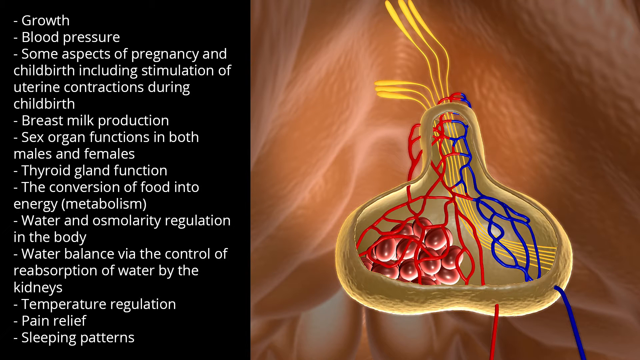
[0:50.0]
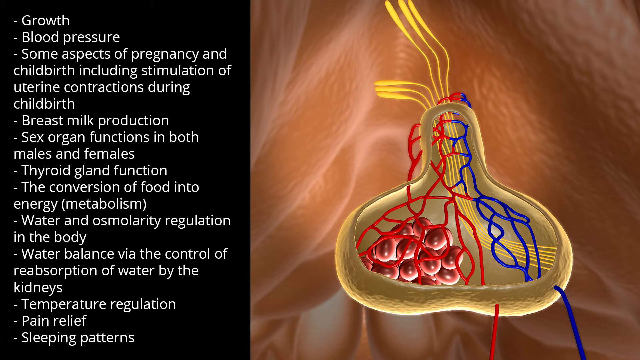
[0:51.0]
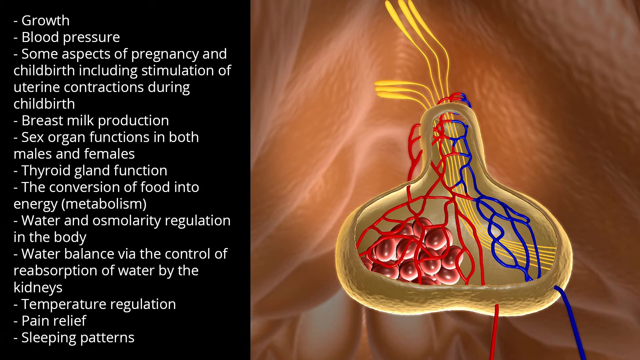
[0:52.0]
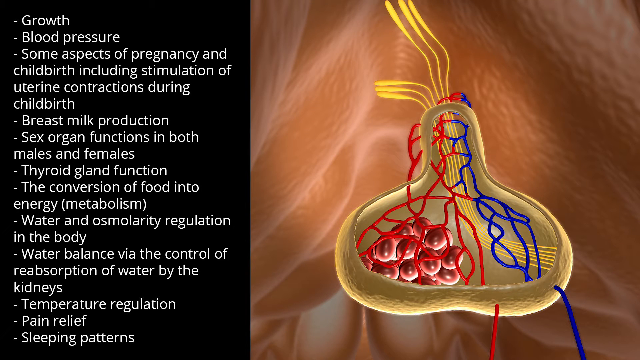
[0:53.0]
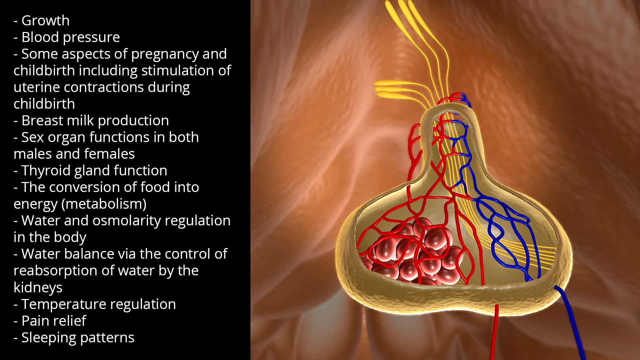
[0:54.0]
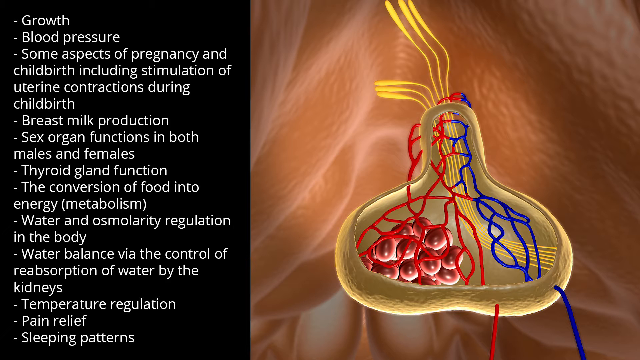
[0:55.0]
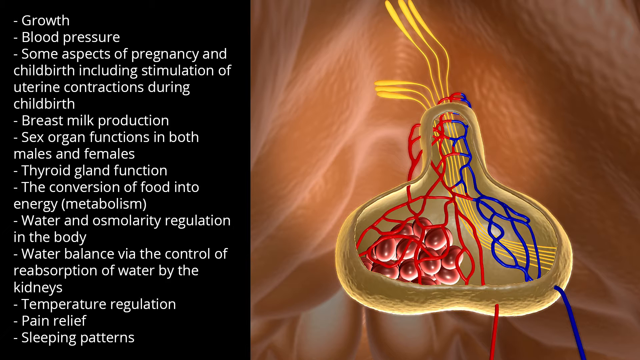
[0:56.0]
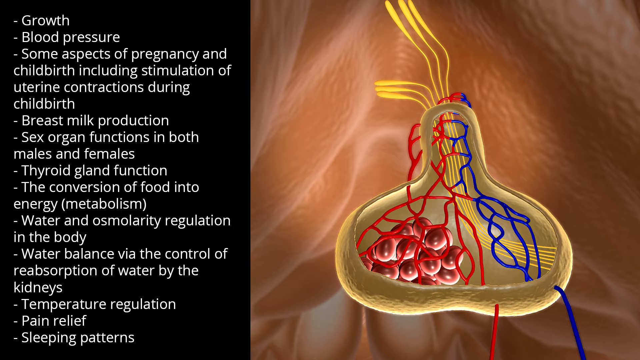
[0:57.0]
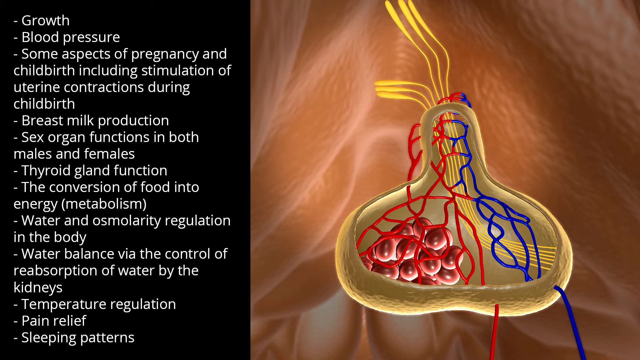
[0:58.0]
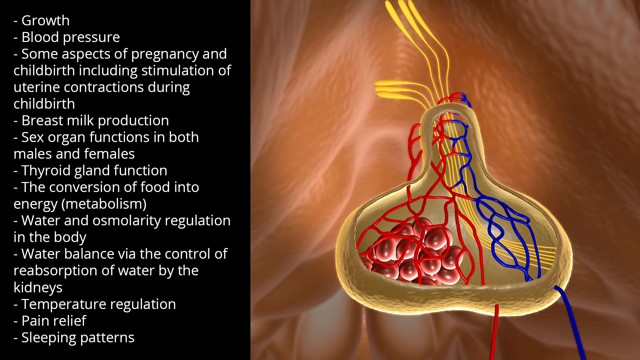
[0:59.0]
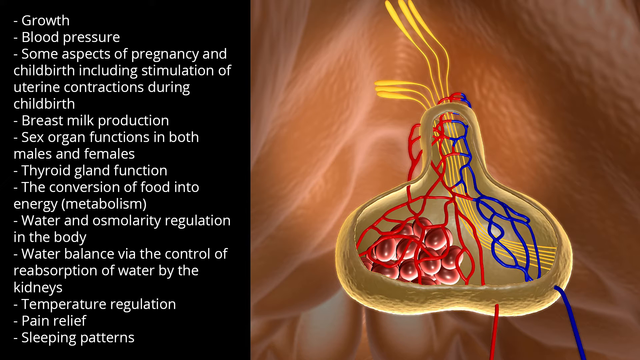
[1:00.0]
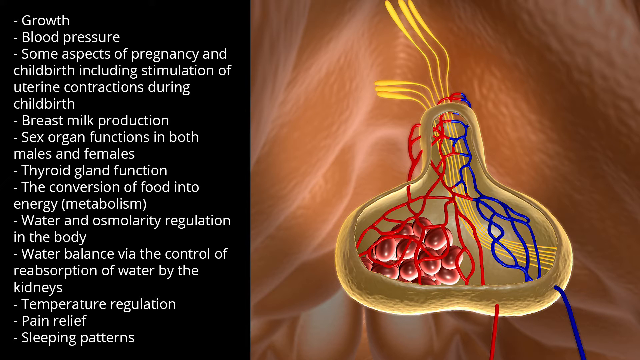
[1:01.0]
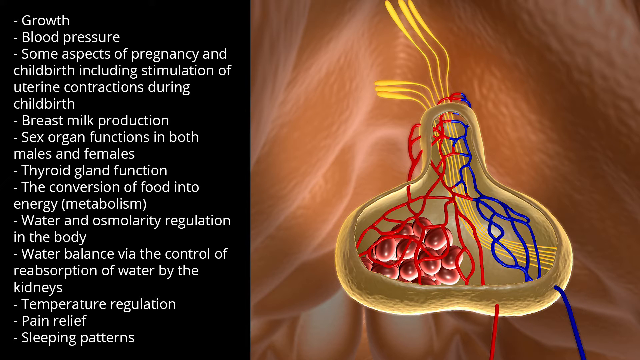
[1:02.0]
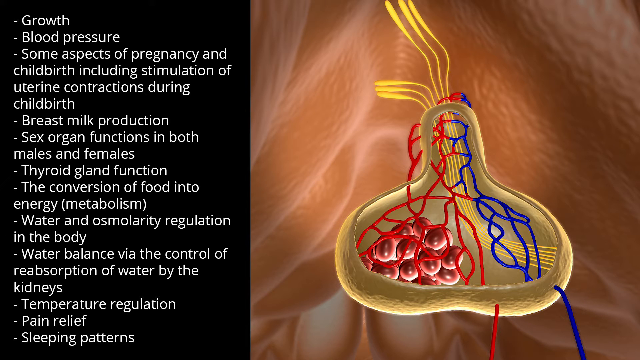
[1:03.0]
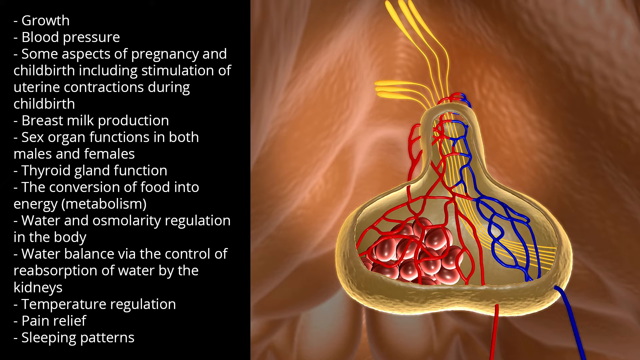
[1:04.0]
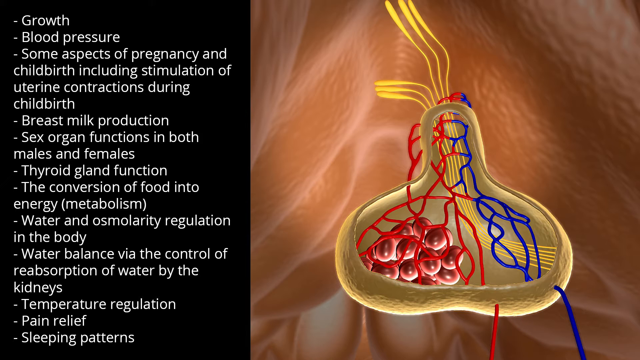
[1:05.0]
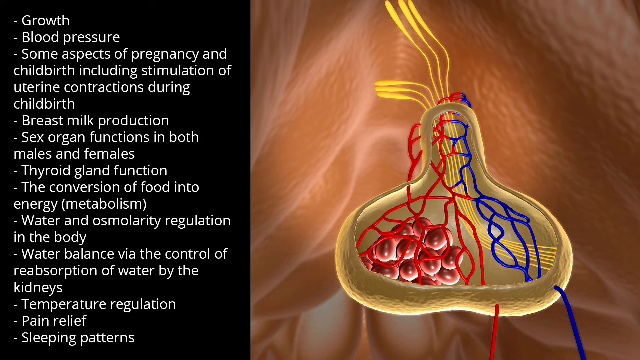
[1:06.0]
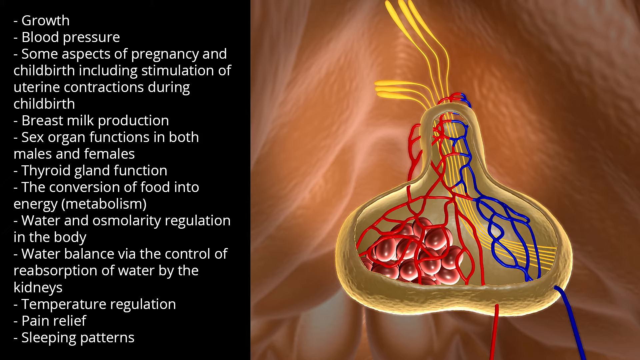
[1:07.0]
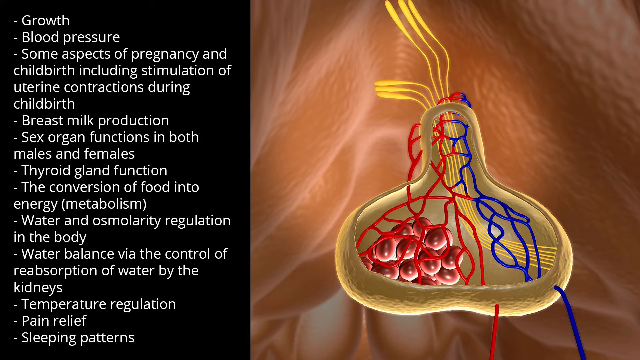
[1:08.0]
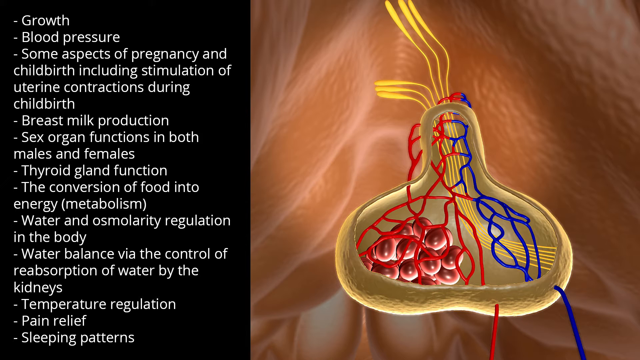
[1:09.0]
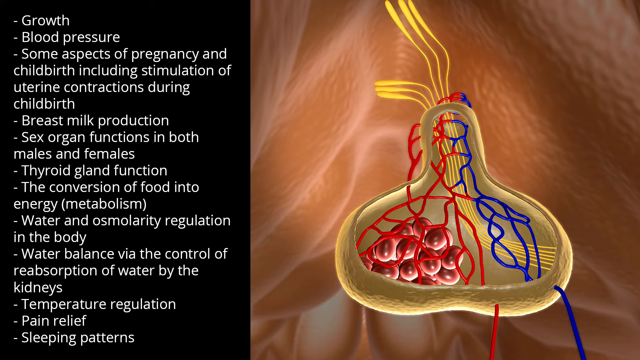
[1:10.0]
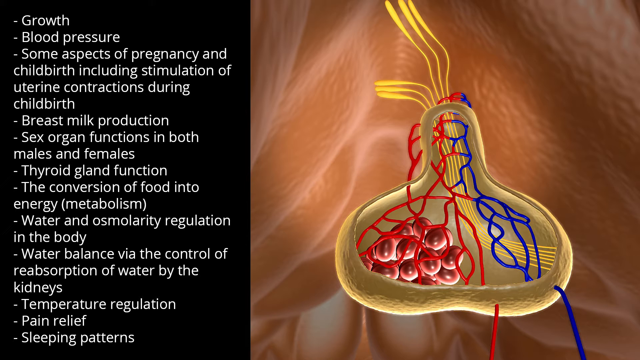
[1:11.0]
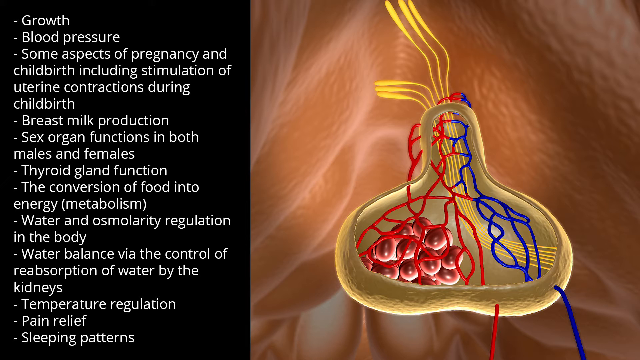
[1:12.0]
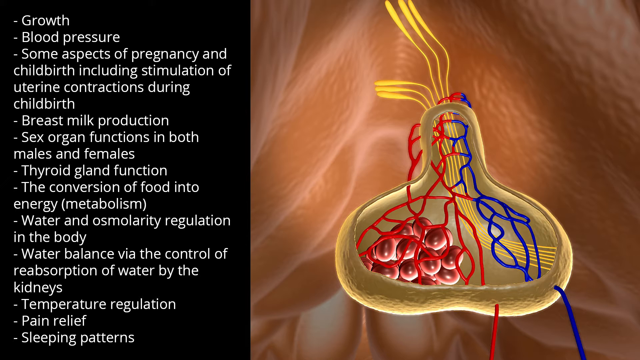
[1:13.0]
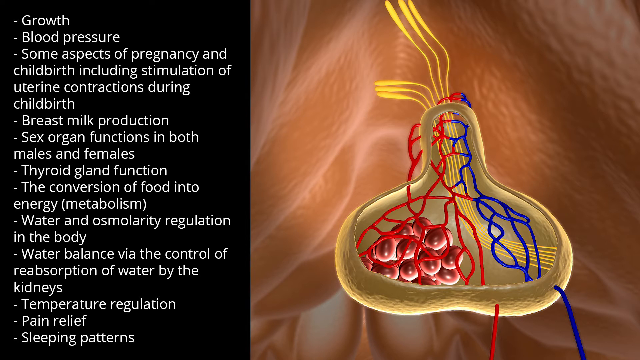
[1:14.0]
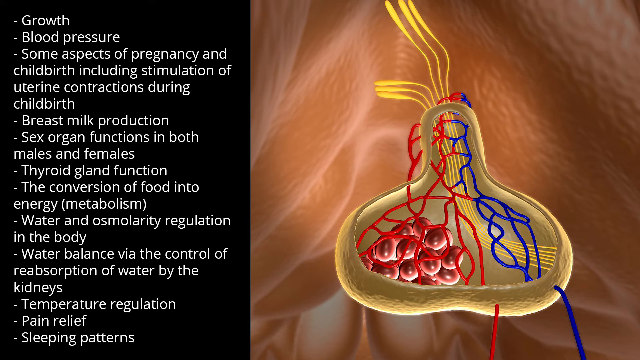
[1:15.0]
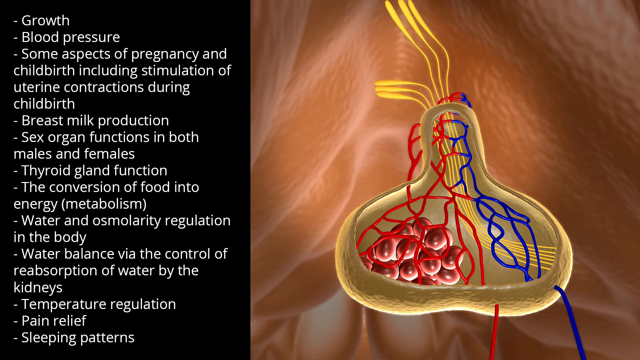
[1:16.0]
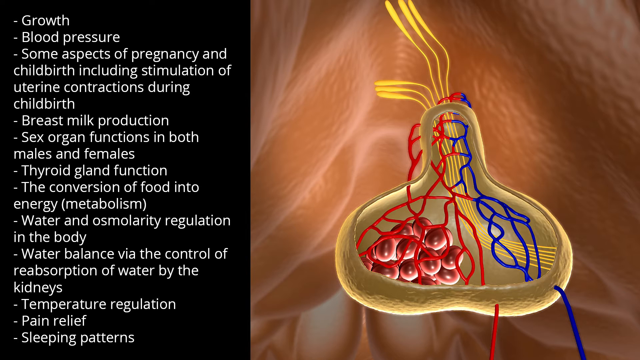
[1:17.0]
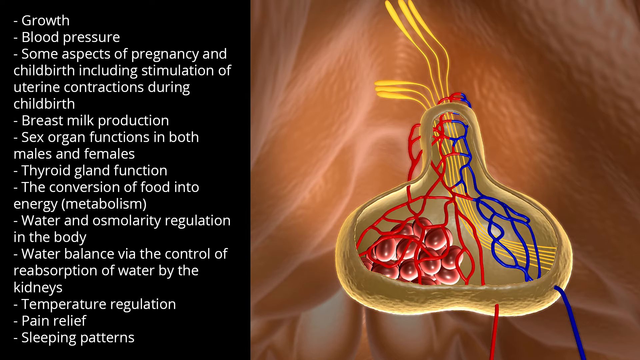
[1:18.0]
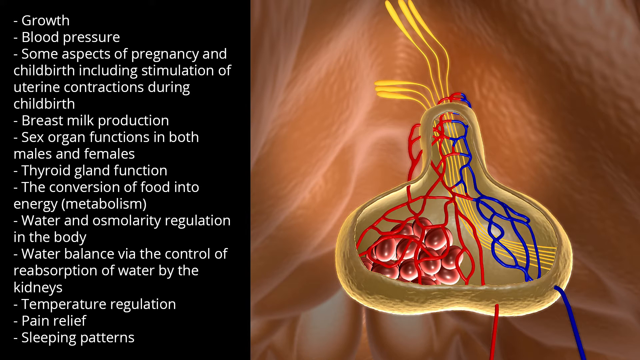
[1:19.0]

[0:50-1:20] The same slide stays on screen as a single still image, with no movement and no moving text. The left third of the slide has text on a black background, and the right two thirds show an image of a biological organ or some kind of anatomy. What look to be red blood cells are in a pocket on the left, there appear to be veins and arteries, and nerves run throughout the image.